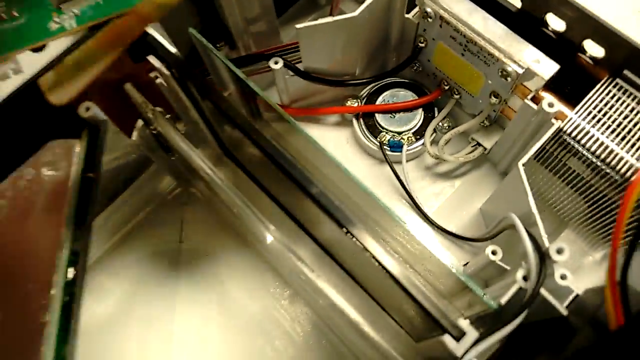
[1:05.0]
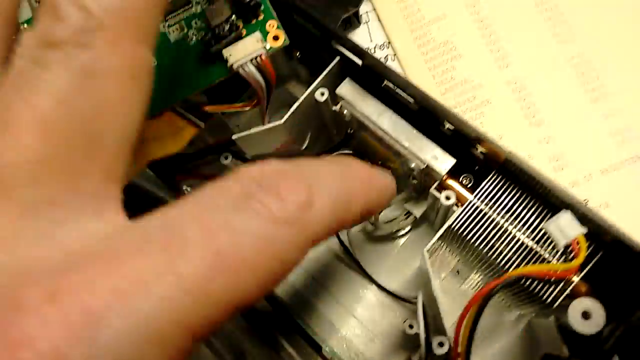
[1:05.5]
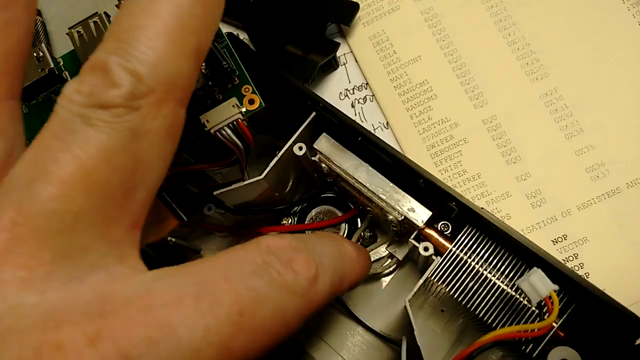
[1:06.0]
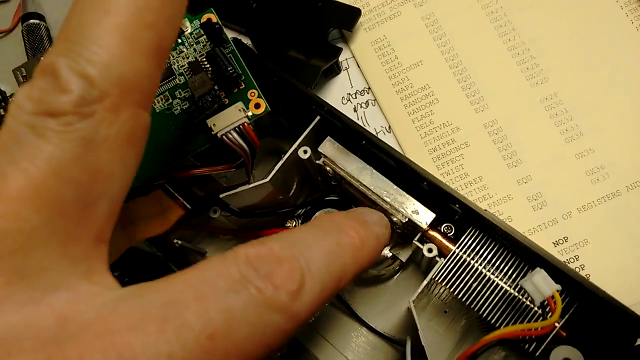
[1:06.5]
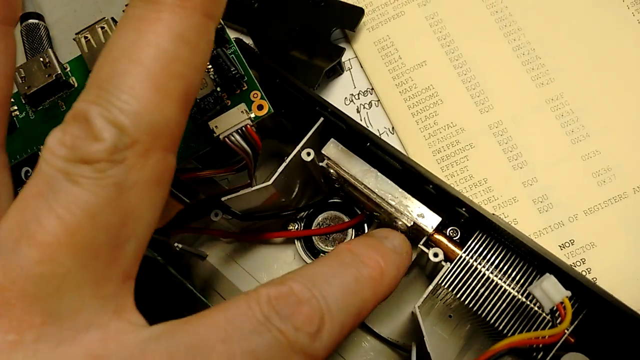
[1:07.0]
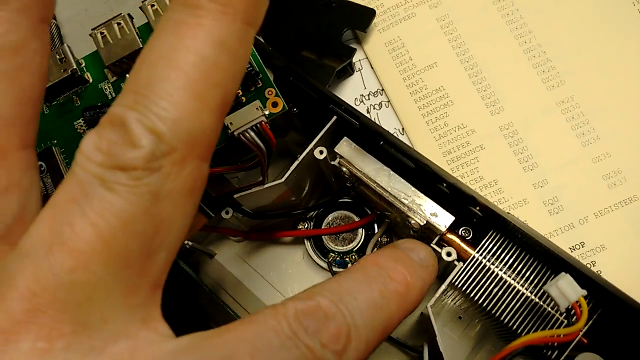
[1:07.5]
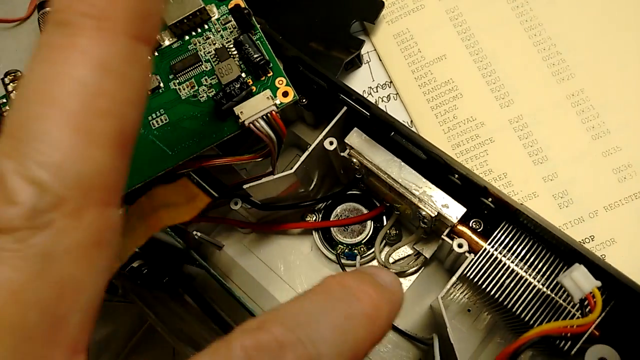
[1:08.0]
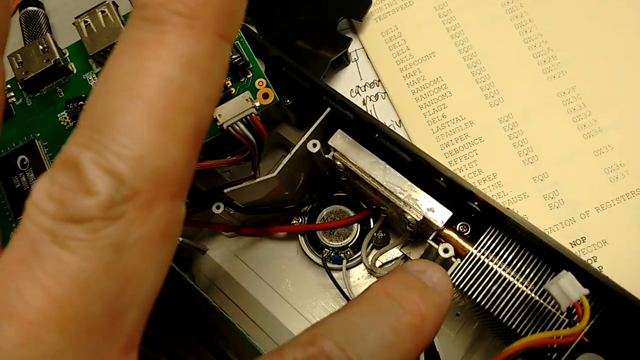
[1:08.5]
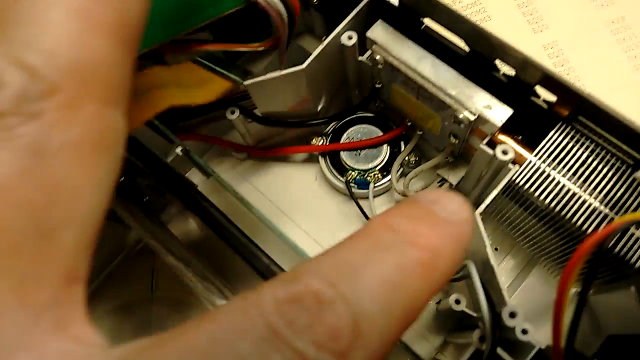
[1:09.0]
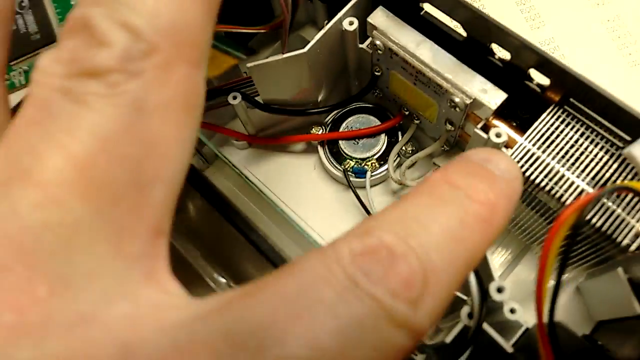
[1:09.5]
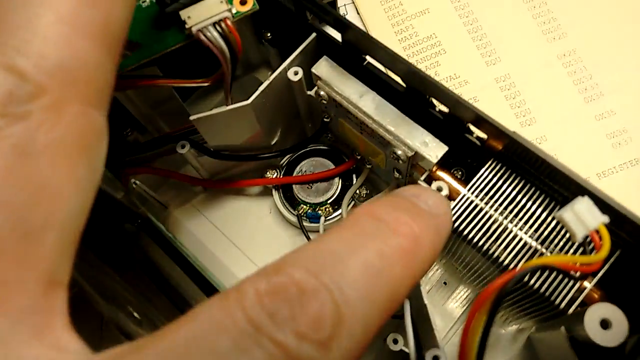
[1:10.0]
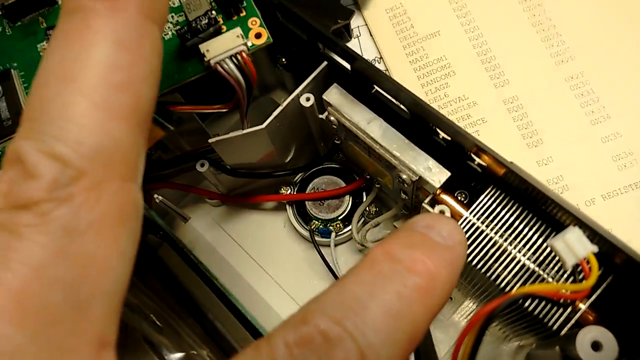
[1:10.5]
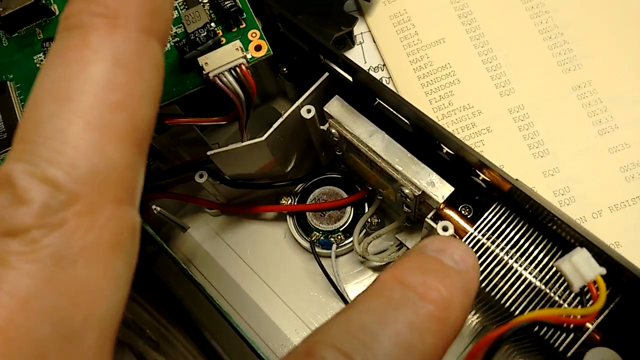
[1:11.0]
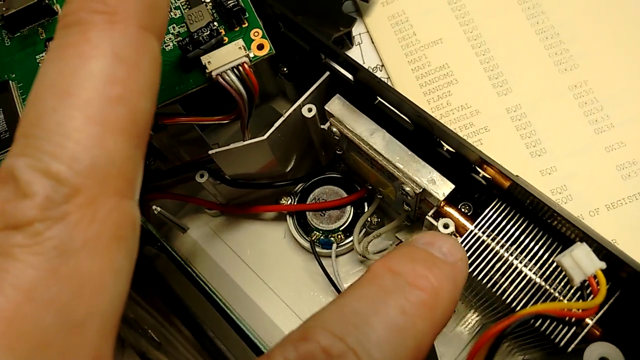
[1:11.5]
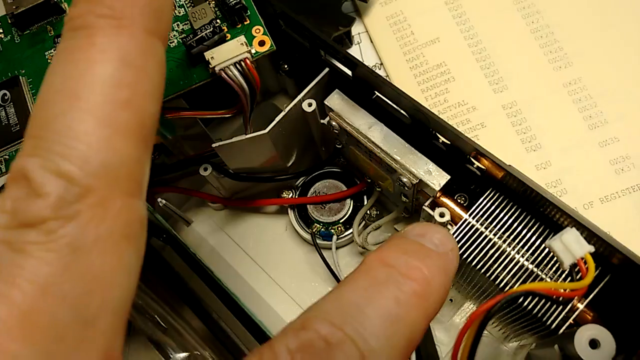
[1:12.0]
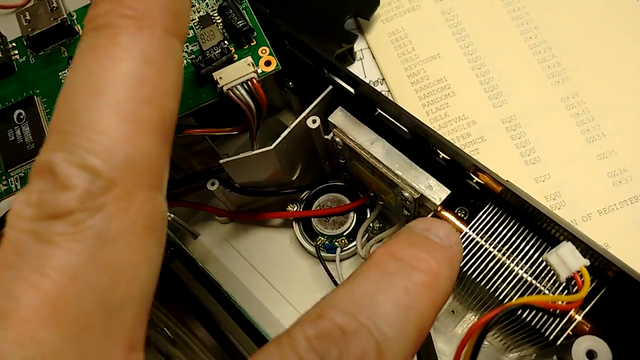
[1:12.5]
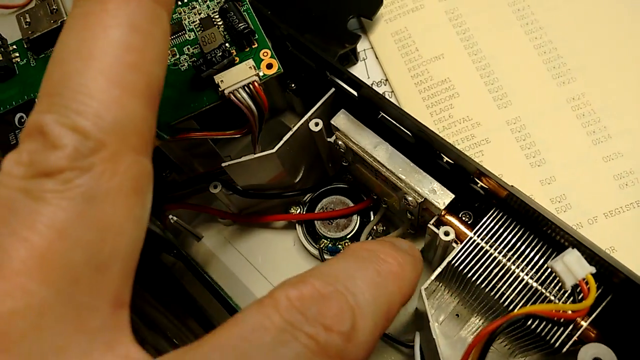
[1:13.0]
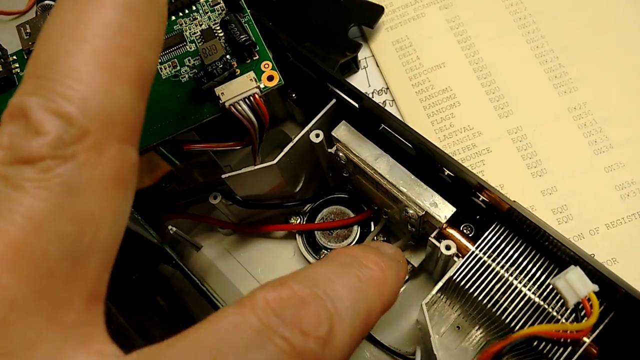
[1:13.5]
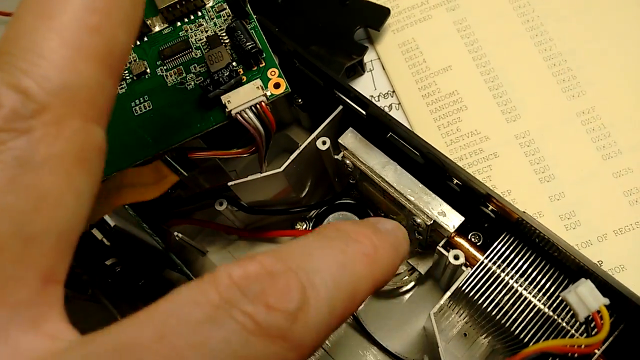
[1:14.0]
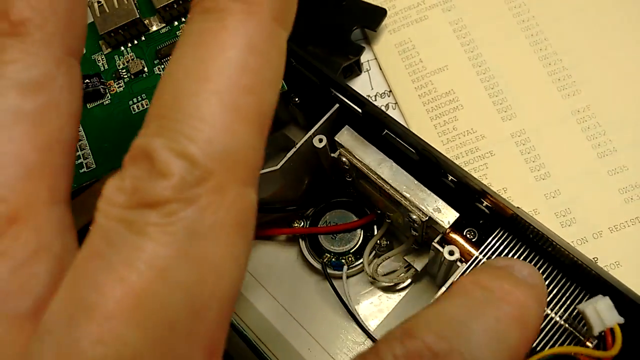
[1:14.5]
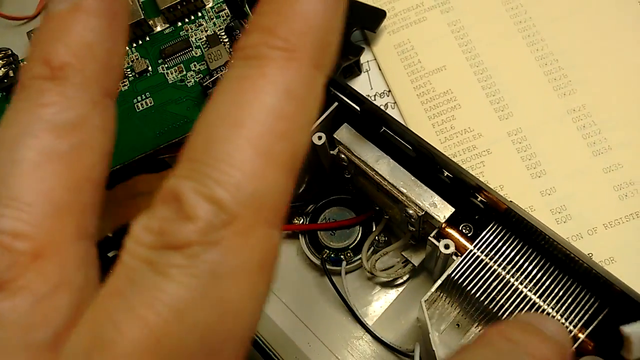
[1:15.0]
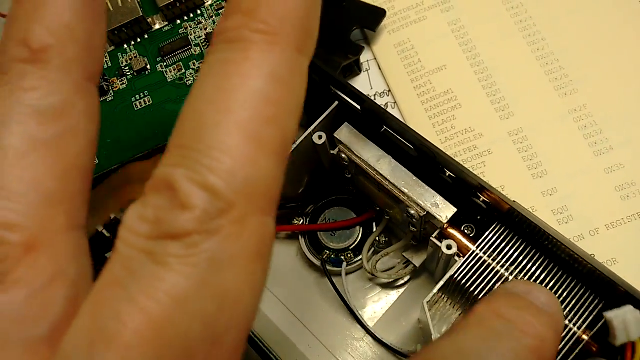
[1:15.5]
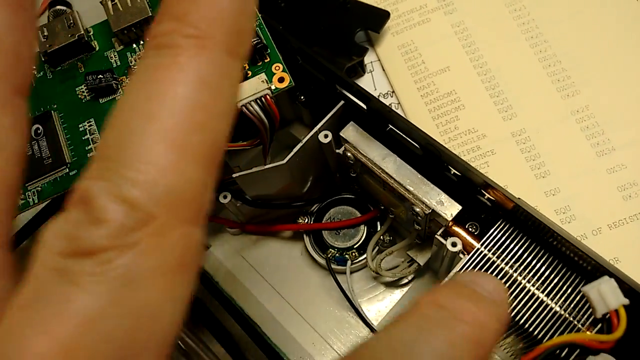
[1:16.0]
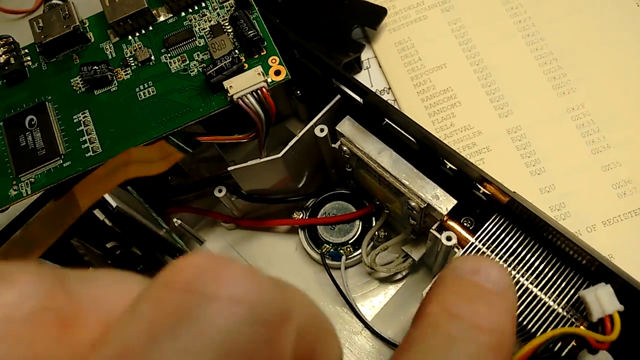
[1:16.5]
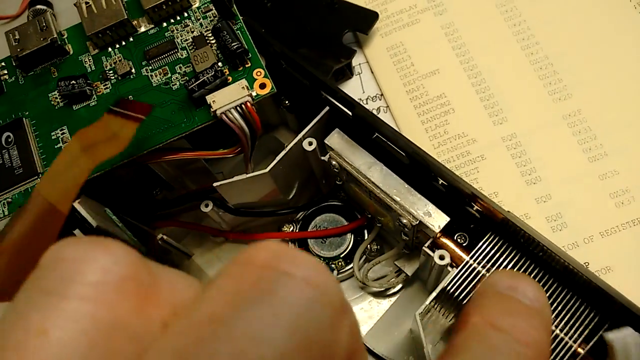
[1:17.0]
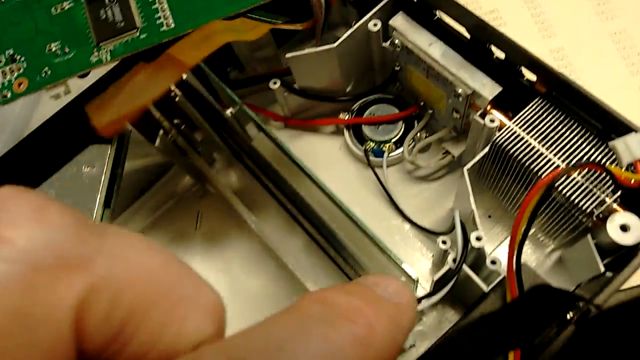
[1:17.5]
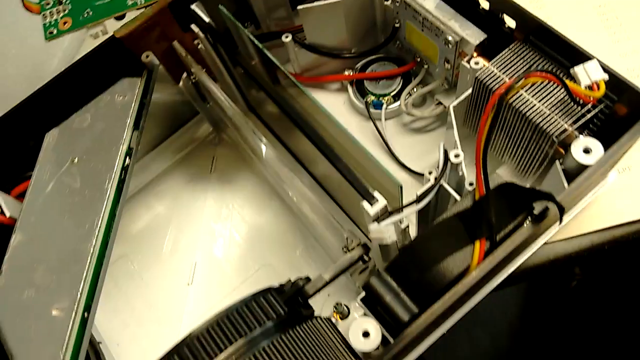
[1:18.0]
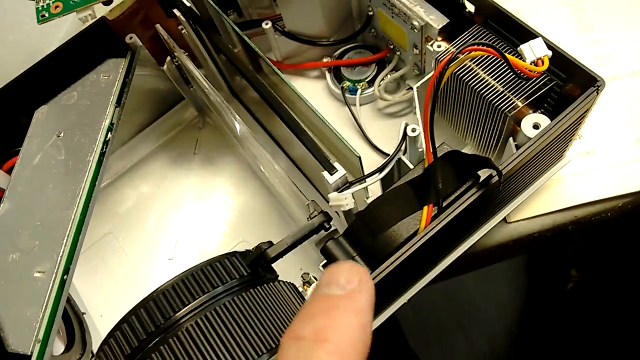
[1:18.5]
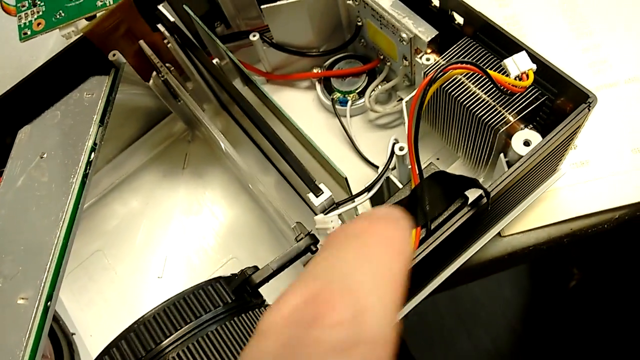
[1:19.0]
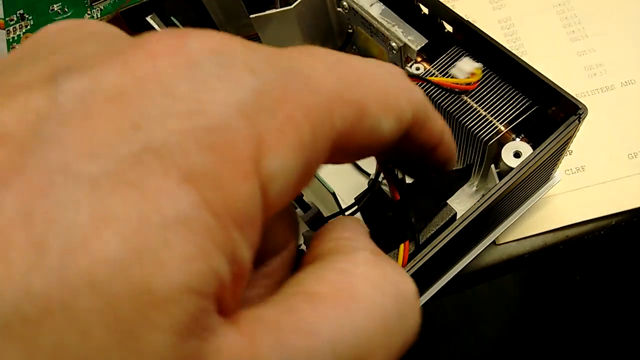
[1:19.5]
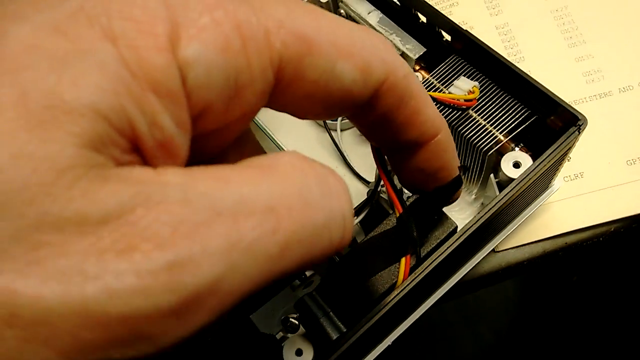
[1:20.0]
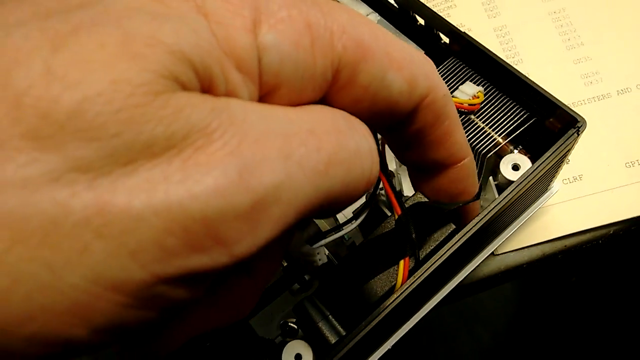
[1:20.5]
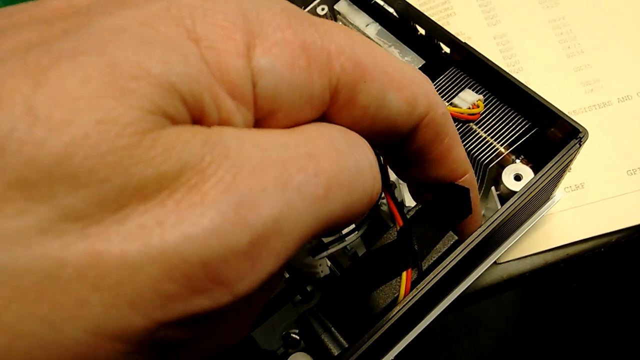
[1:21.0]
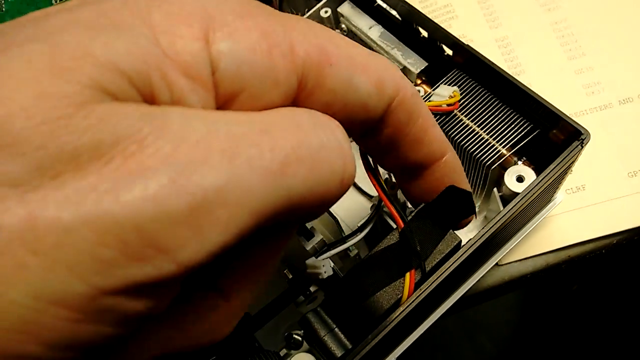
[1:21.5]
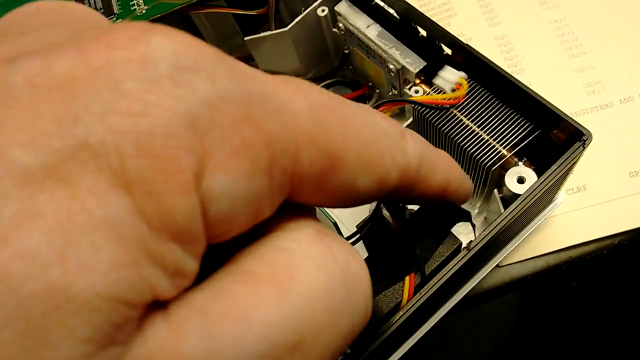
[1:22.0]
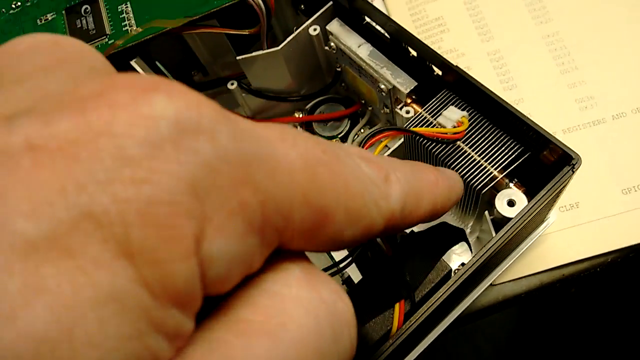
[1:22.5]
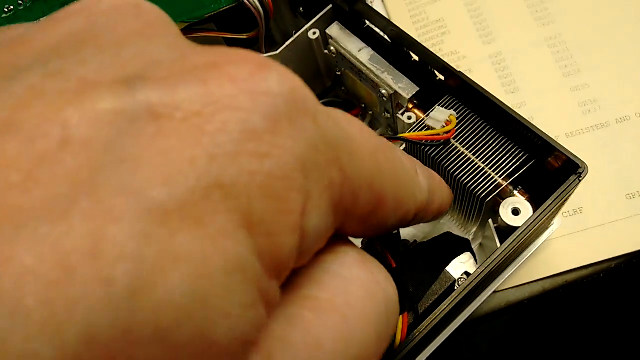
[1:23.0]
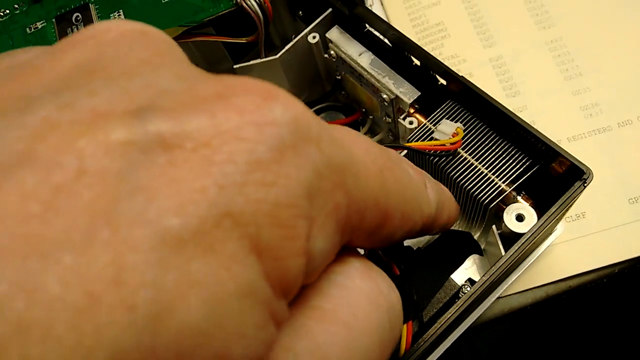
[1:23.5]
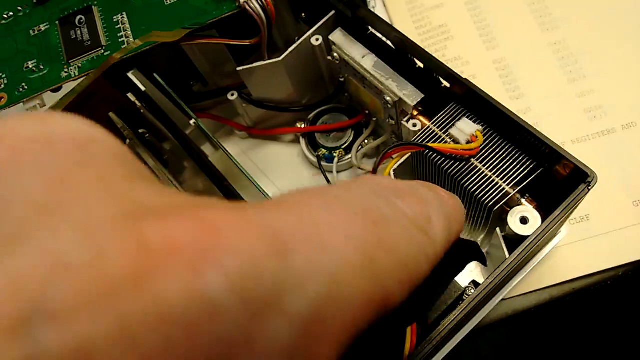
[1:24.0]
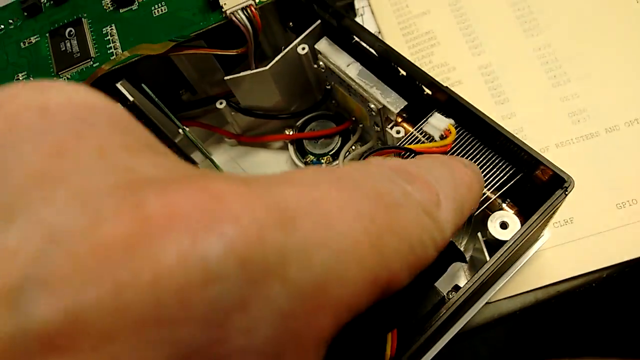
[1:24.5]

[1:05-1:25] The hand of a white Caucasian male is inside the LED projector, showing its components. He focuses on the right side again, but more toward the front of the machine, showing only the two parts on the right: a metal grid with black, red, and yellow wires above it, and what looks like a piece of black tape. Only the front right-hand side is shown.